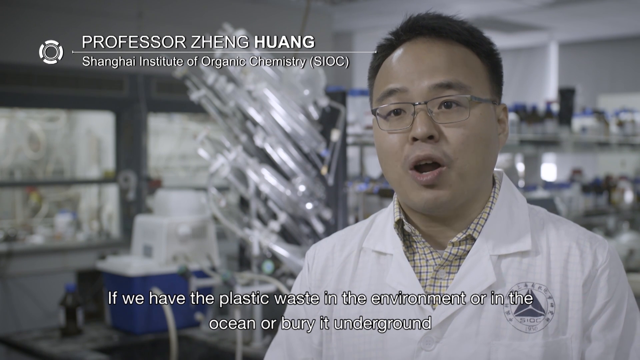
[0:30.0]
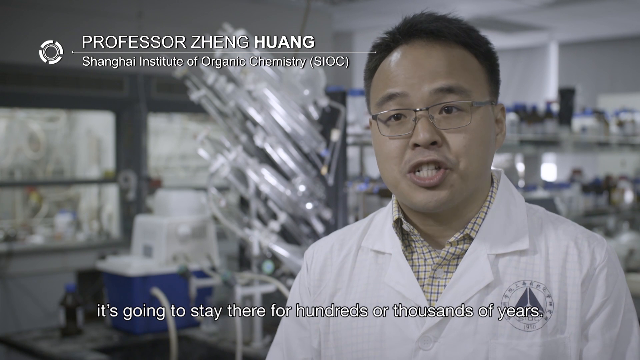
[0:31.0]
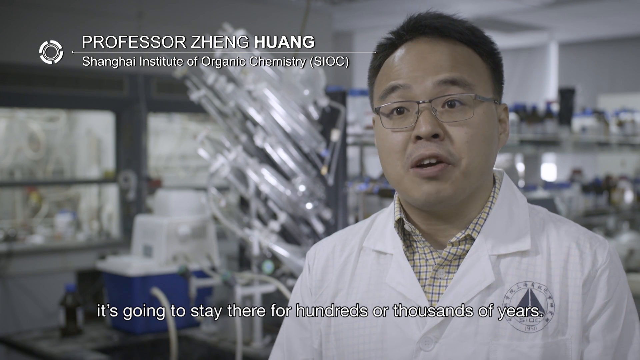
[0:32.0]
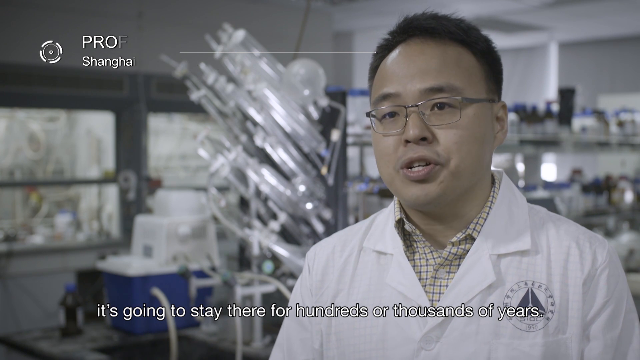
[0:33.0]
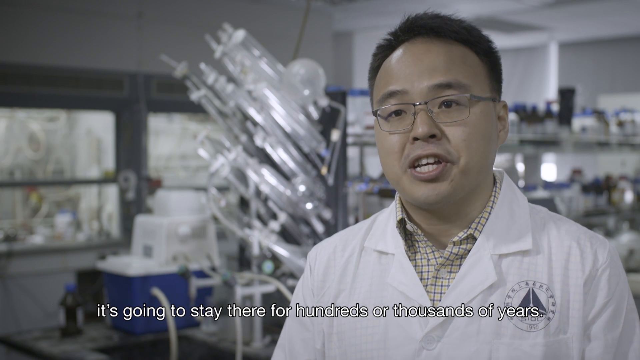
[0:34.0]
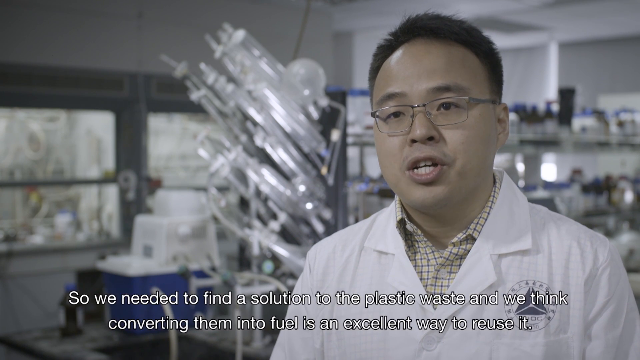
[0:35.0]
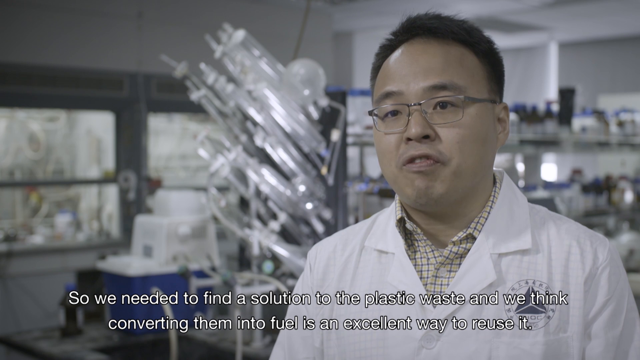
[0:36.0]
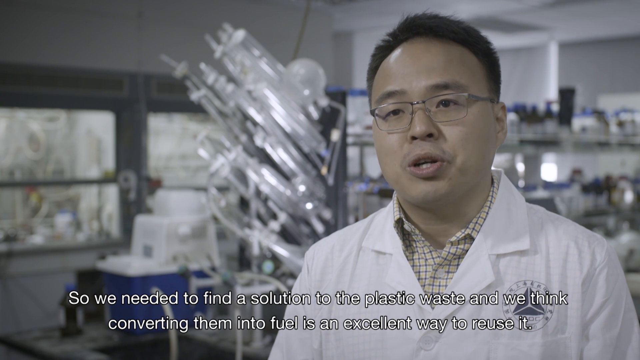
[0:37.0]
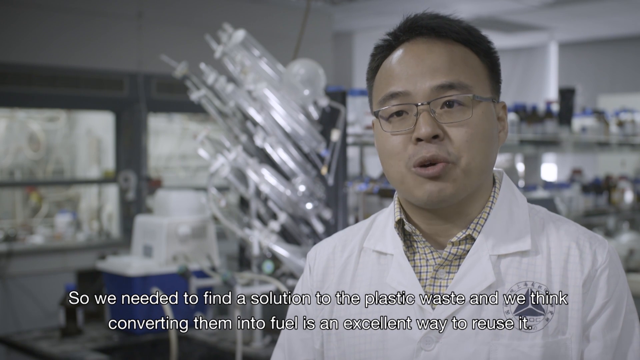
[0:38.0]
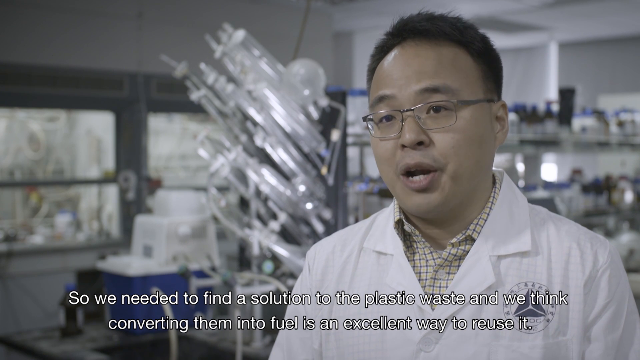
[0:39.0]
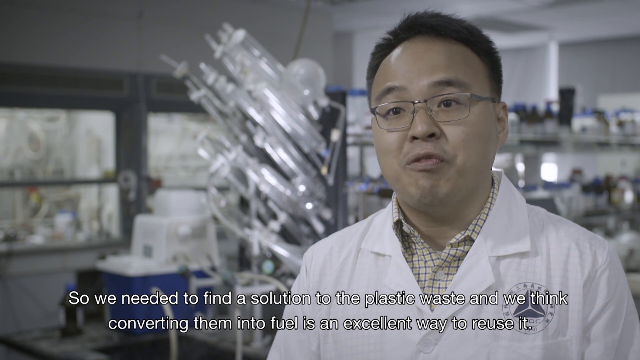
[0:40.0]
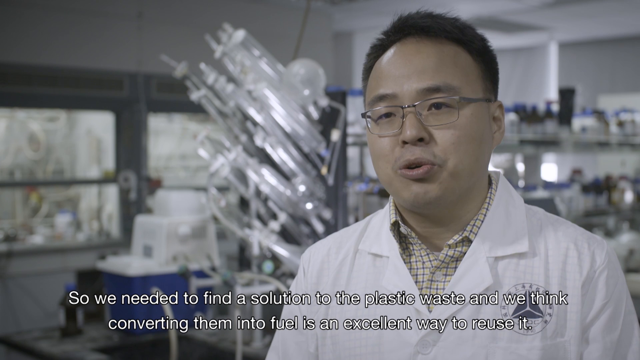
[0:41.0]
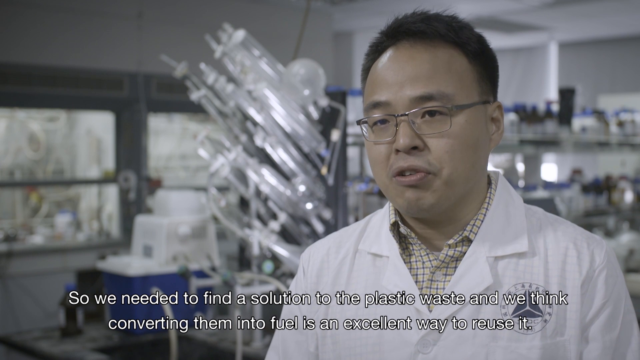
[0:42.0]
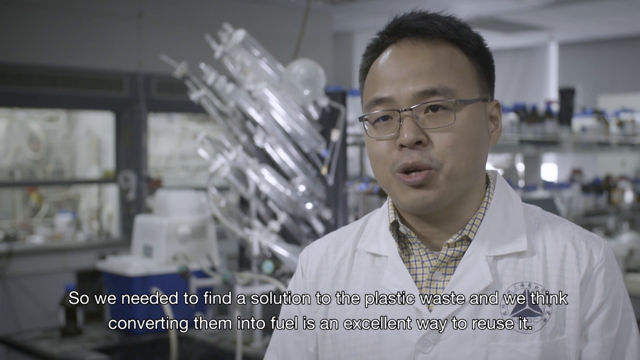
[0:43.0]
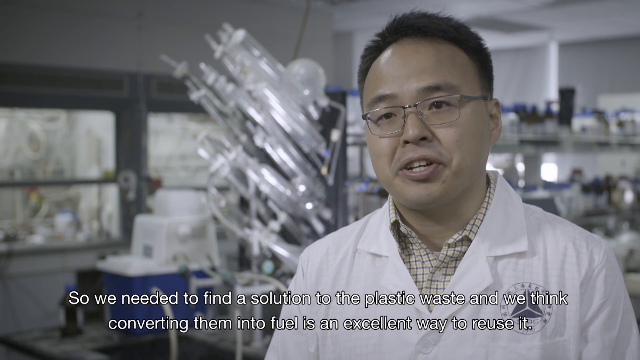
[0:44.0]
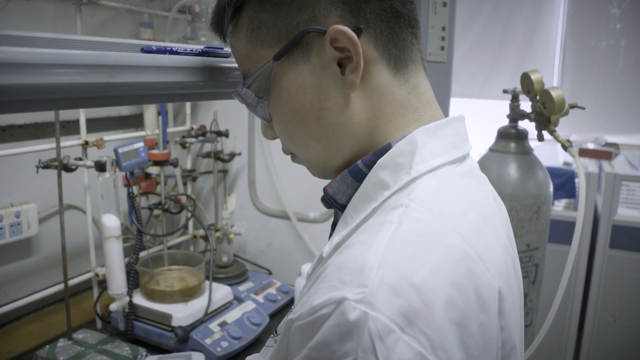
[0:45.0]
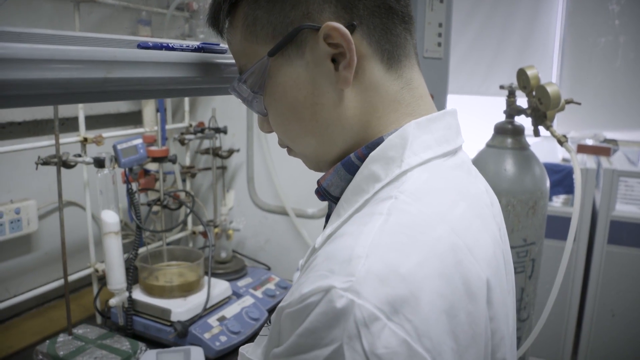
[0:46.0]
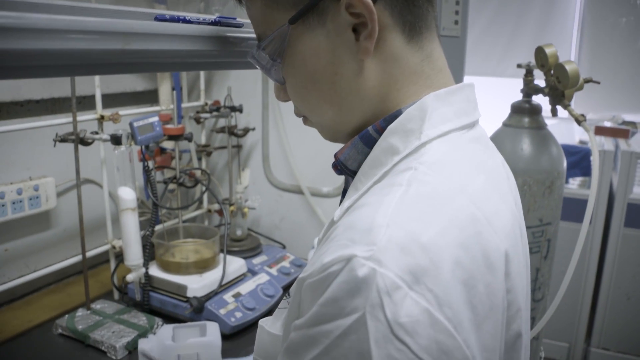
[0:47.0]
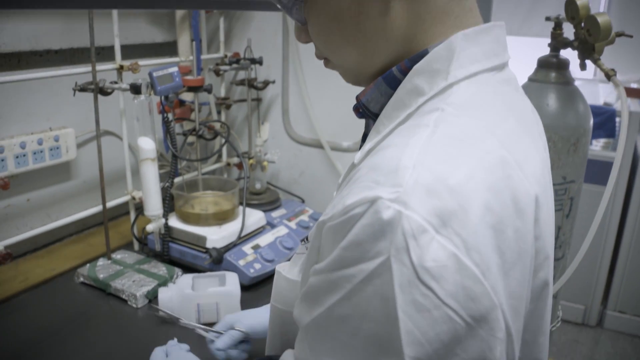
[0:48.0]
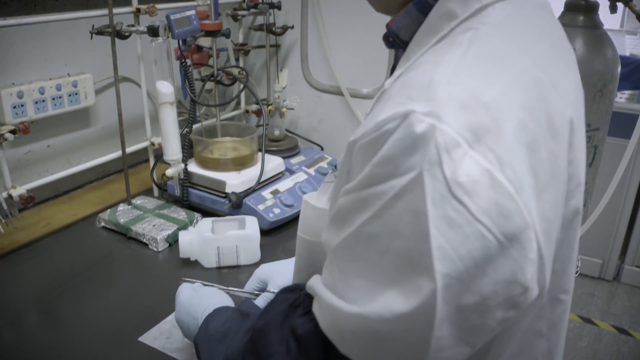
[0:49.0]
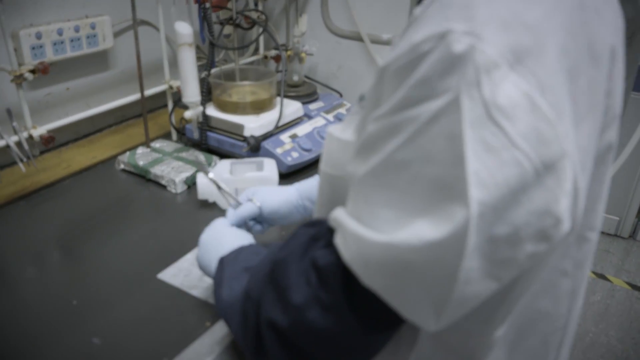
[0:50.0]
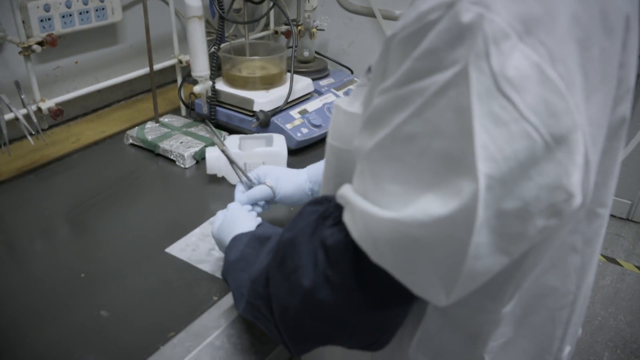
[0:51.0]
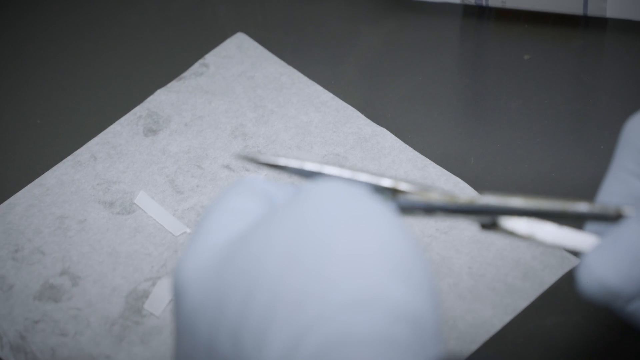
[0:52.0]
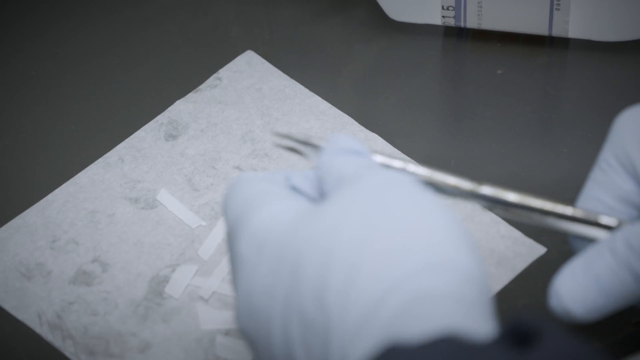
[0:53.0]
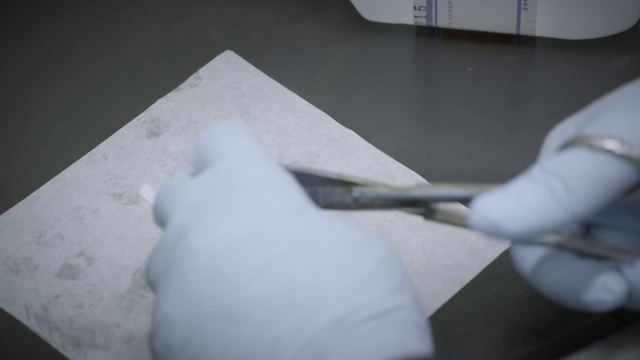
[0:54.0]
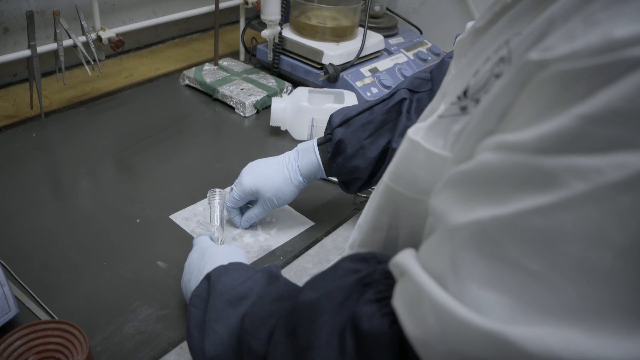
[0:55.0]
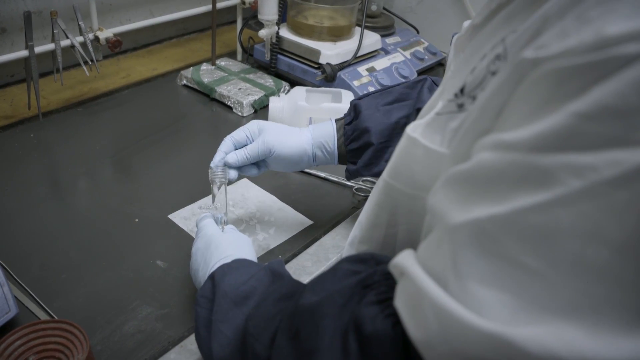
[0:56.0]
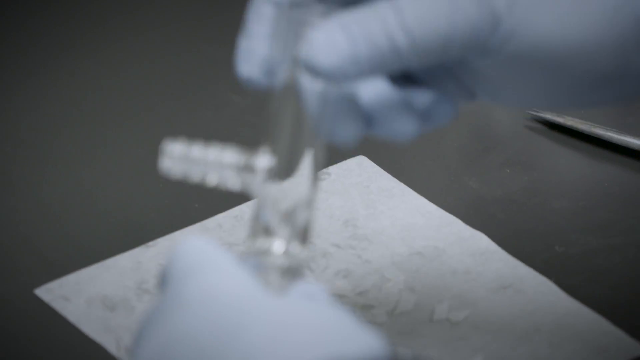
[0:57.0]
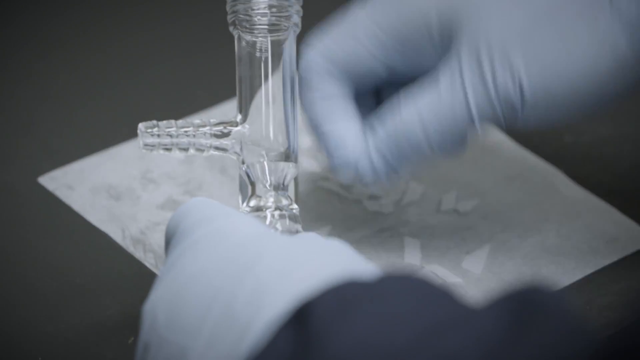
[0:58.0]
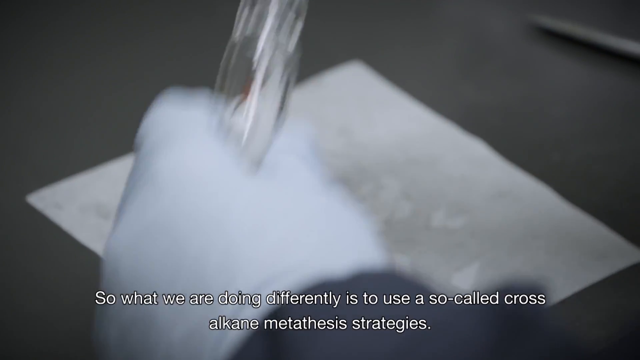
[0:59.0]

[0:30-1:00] A scientist speaks to the camera, wearing a white lab coat, glasses, and a cream-colored button-down shirt with thin red lines. Text in the top left corner reads "Professor Zheng Huang," with "Shanghai Institute of Organic Chemistry, SIOC" underneath. As he speaks, text at the bottom of the screen reads "if we have the plastic waste in the environment or in the ocean or bury it underground, it's going to stay there for hundreds or thousands of years. So we needed to find a solution to the plastic waste, and we think converting them into fuel is an excellent way to reuse it." A scientist then stands next to a black lab table holding a pair of scissors in his right hand, cutting some type of white, paper-looking object into thin strips. A close-up of sorts shows the scissors cutting the strips. He then picks up the strips and puts them into a small glass test tube.